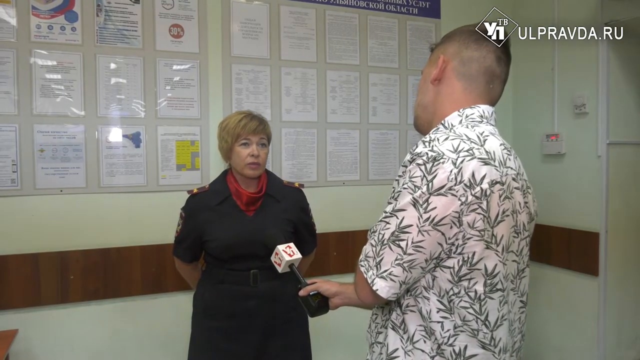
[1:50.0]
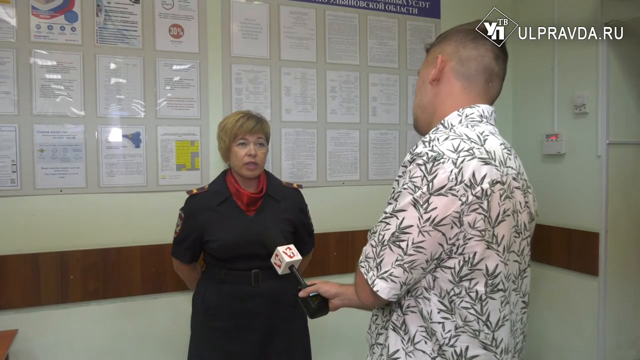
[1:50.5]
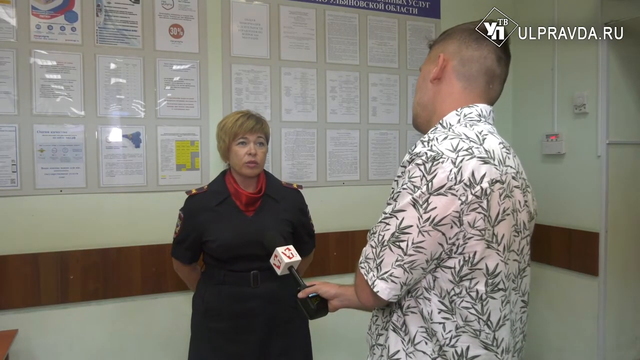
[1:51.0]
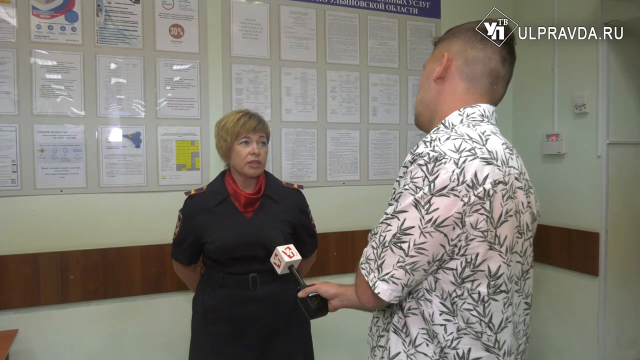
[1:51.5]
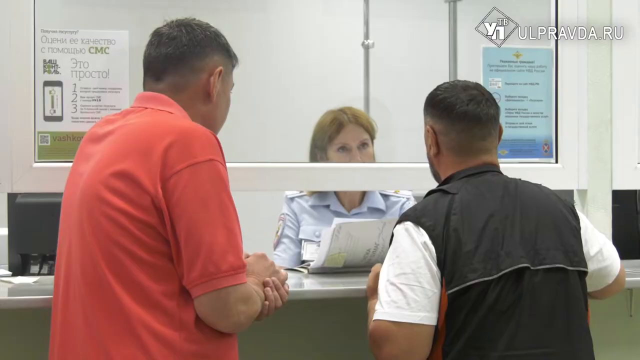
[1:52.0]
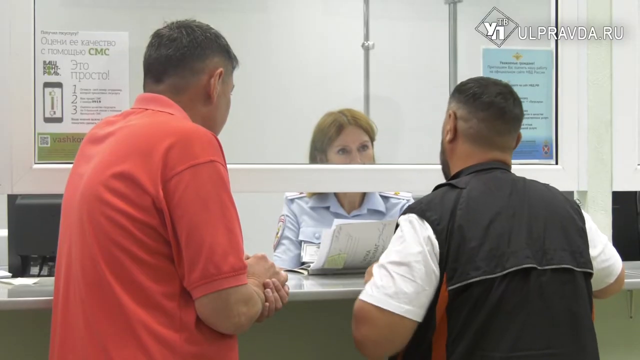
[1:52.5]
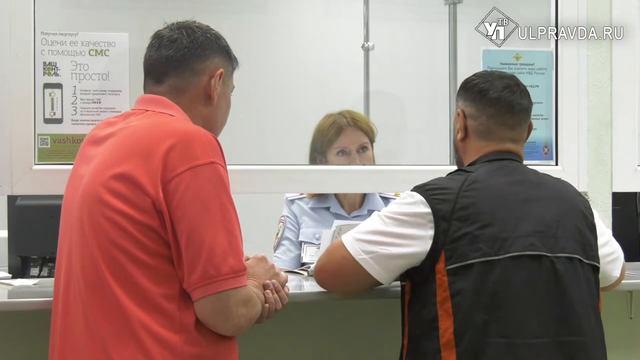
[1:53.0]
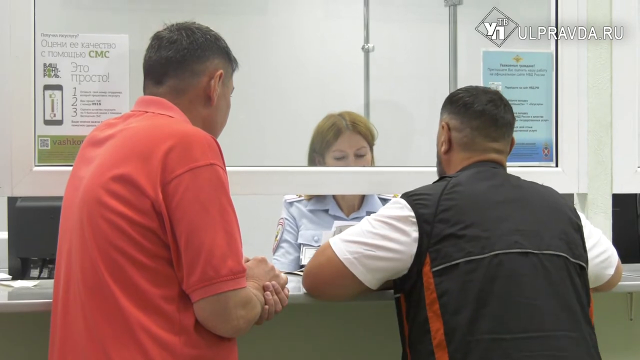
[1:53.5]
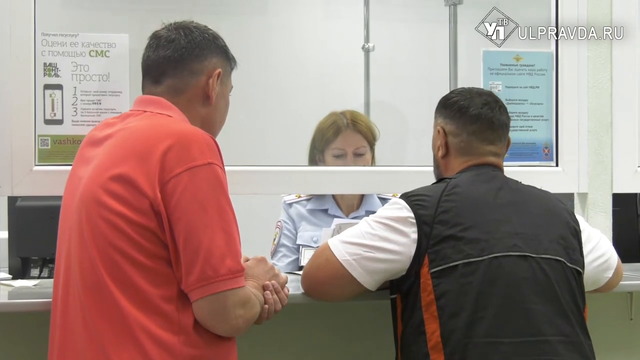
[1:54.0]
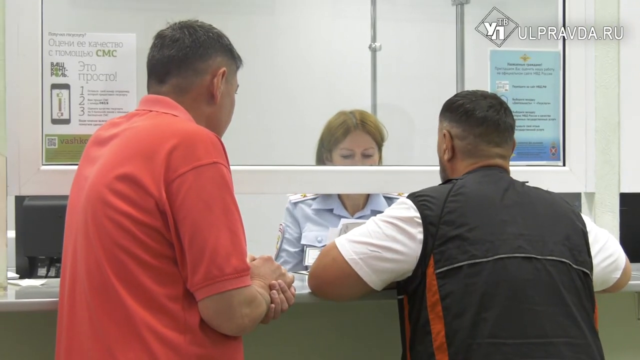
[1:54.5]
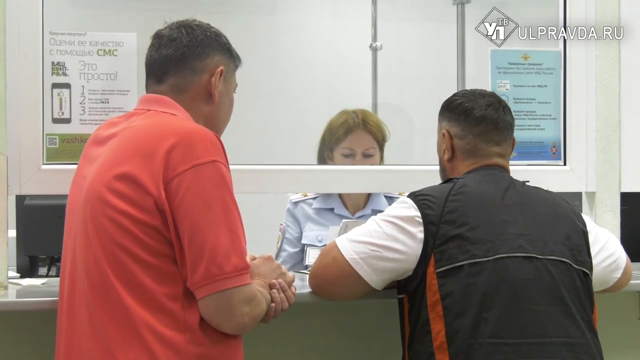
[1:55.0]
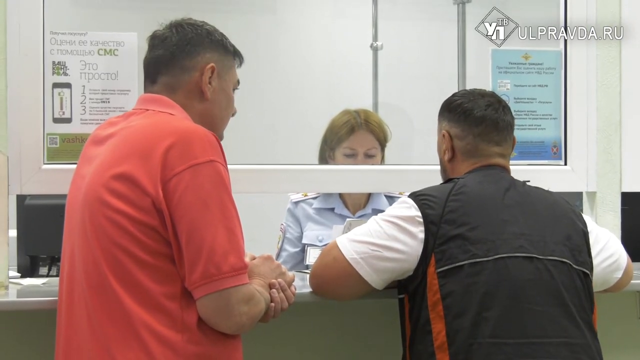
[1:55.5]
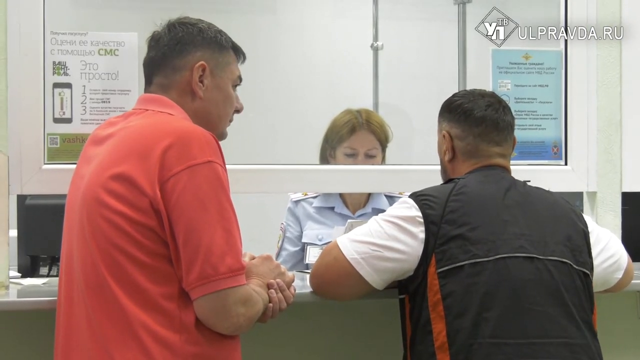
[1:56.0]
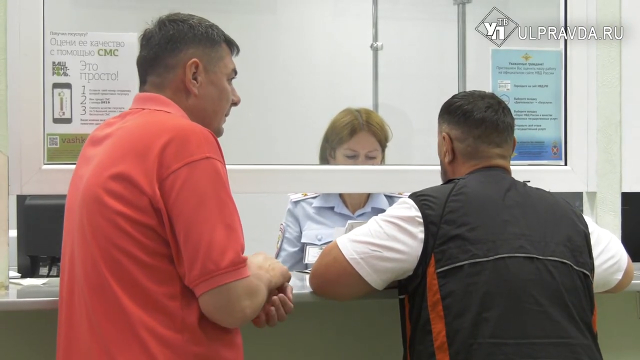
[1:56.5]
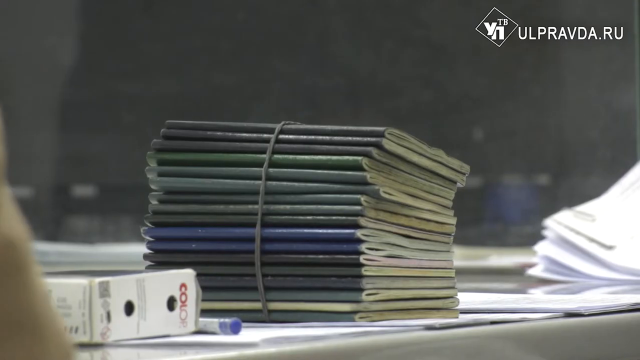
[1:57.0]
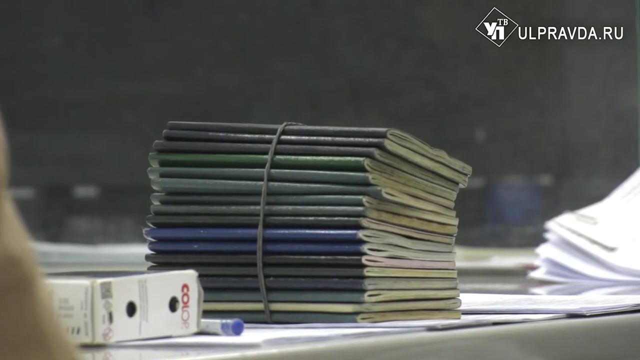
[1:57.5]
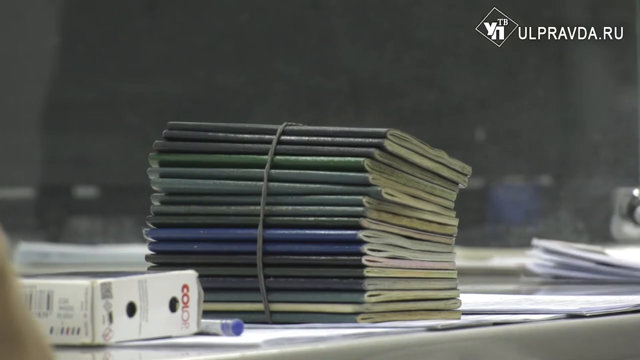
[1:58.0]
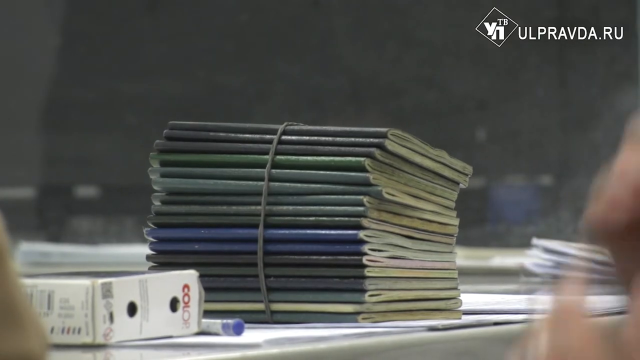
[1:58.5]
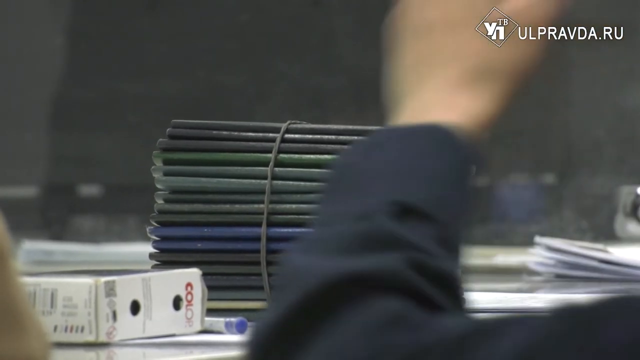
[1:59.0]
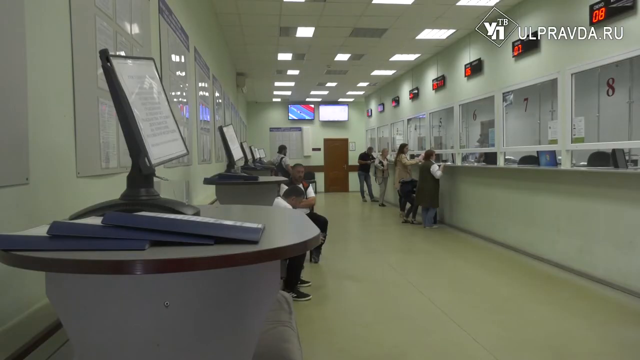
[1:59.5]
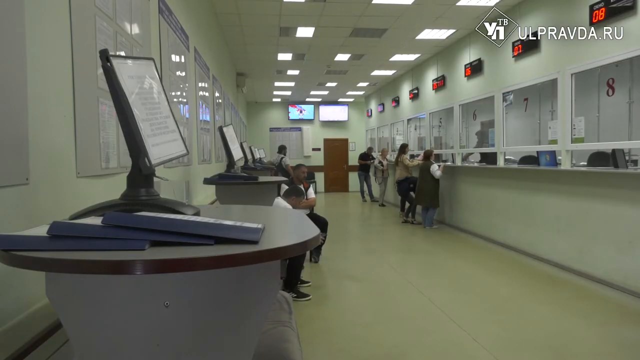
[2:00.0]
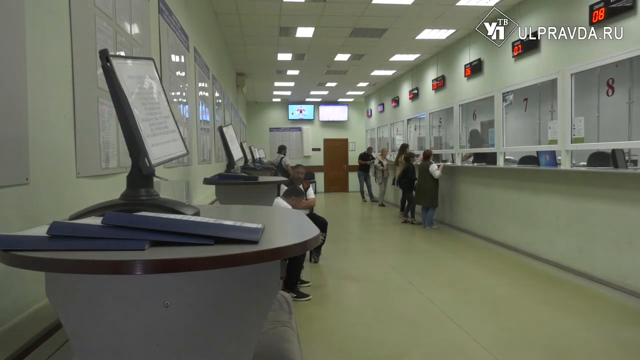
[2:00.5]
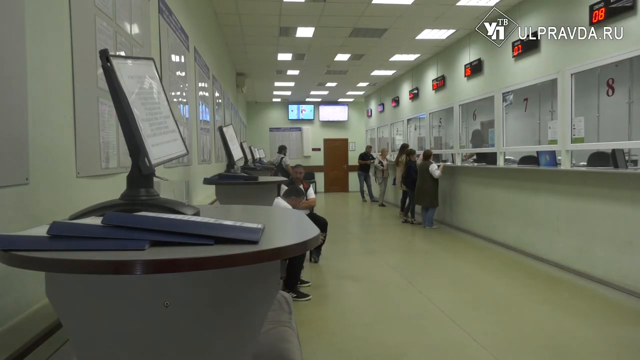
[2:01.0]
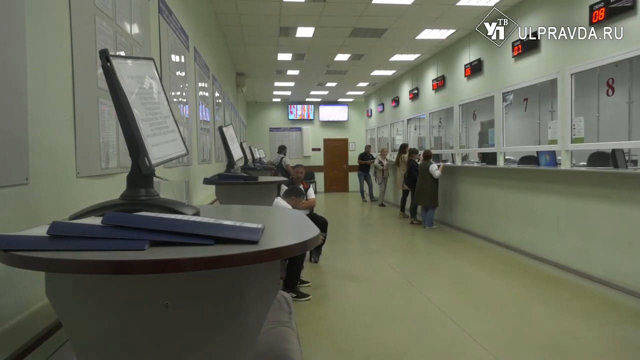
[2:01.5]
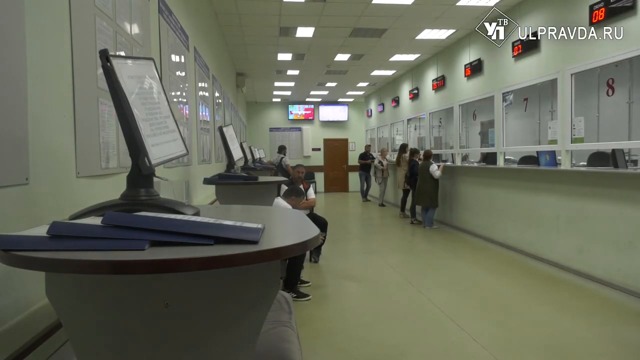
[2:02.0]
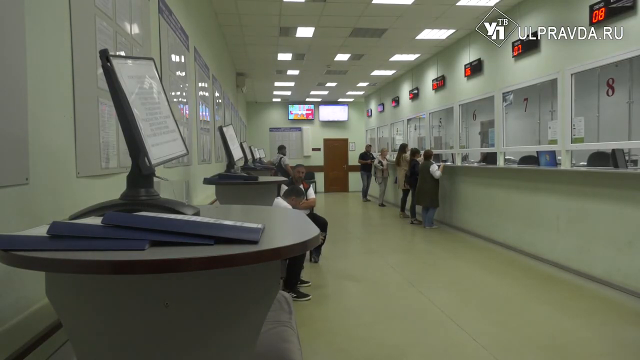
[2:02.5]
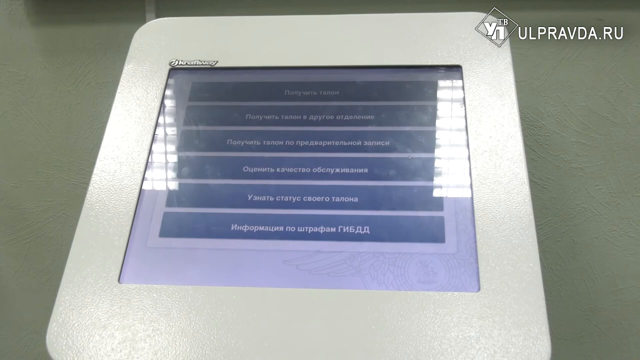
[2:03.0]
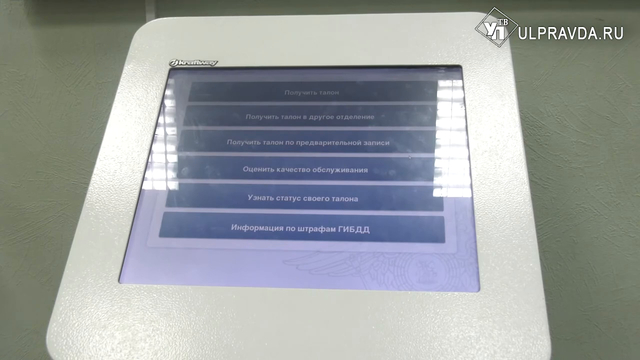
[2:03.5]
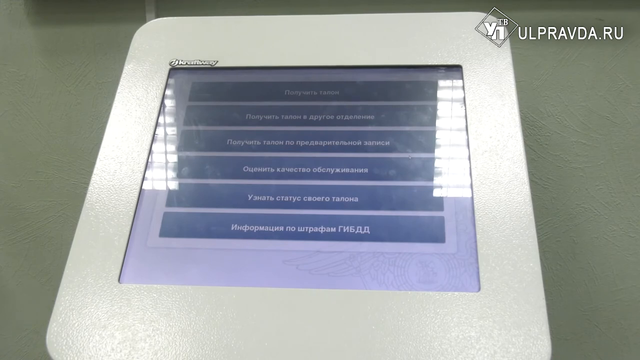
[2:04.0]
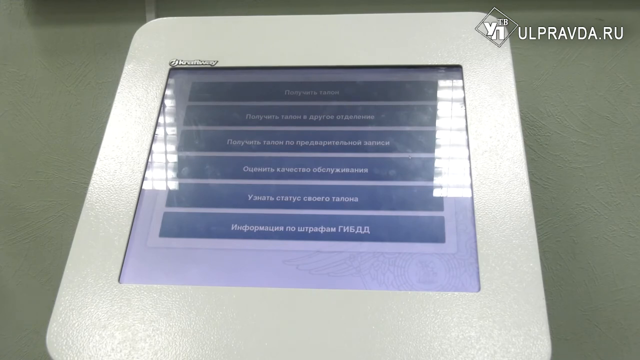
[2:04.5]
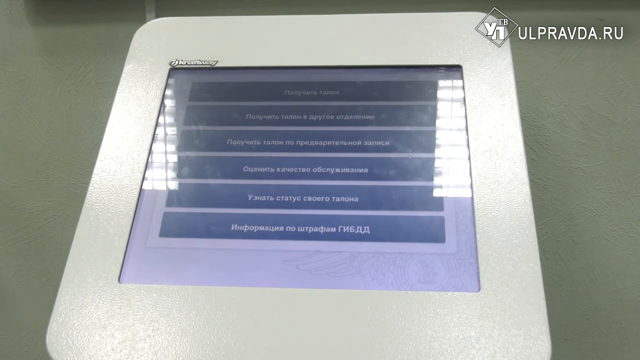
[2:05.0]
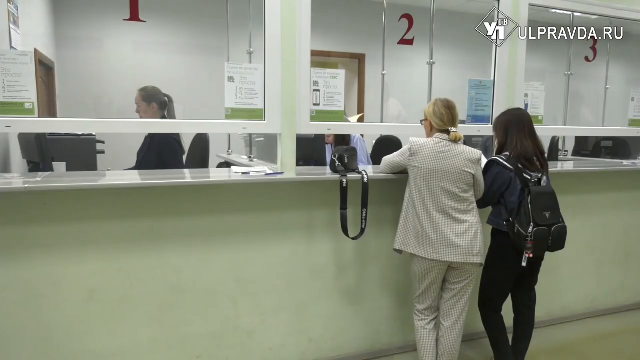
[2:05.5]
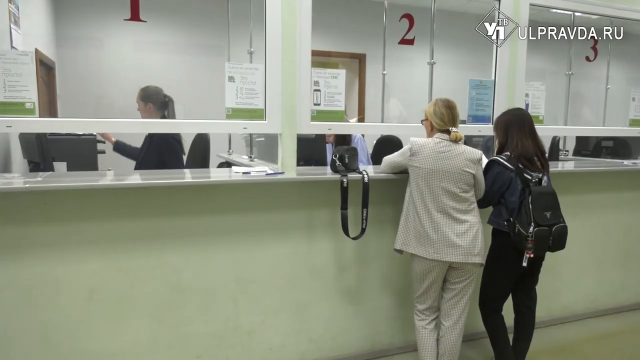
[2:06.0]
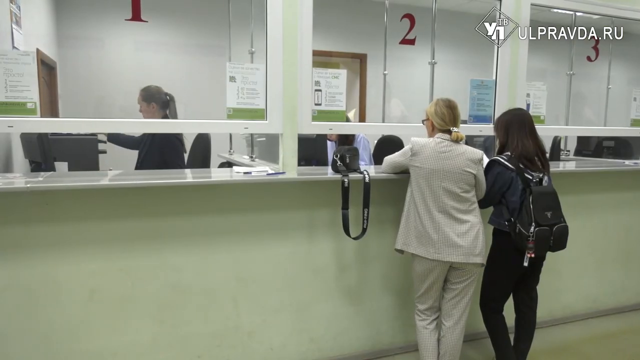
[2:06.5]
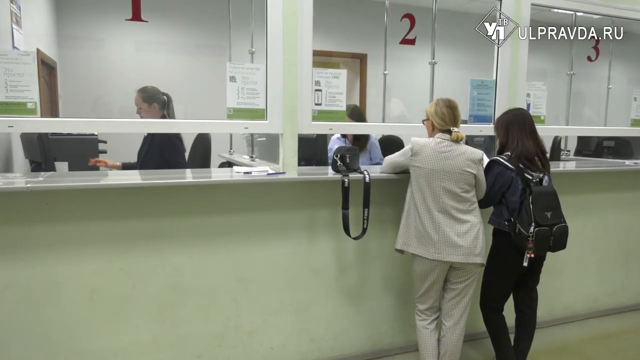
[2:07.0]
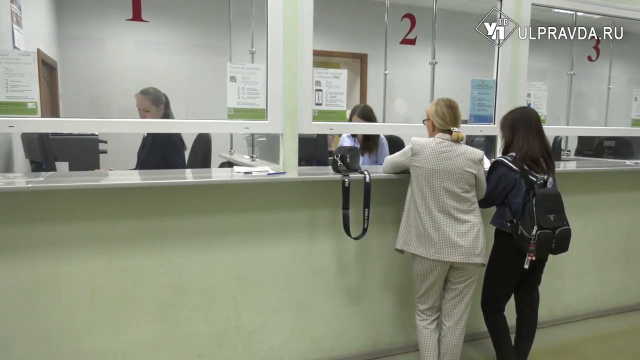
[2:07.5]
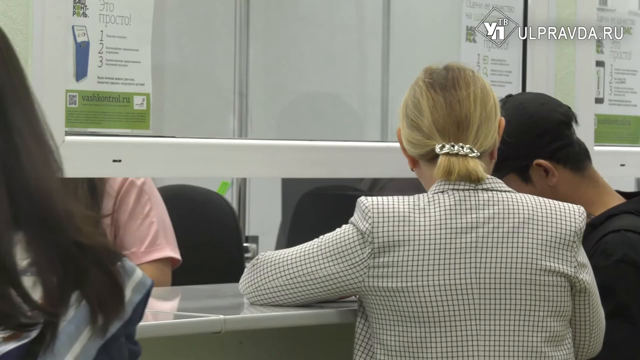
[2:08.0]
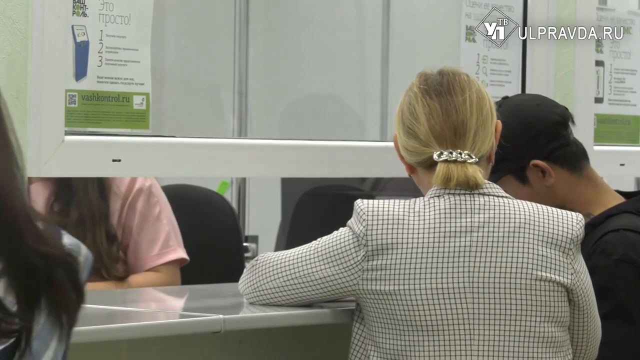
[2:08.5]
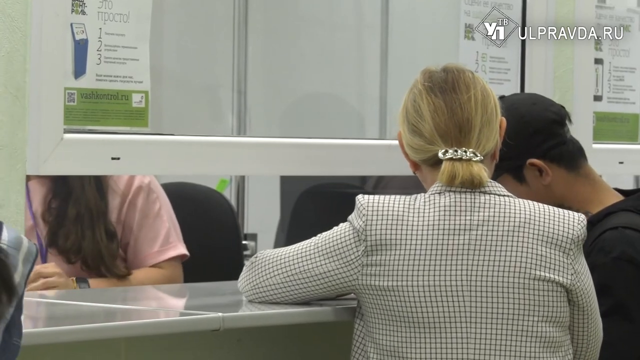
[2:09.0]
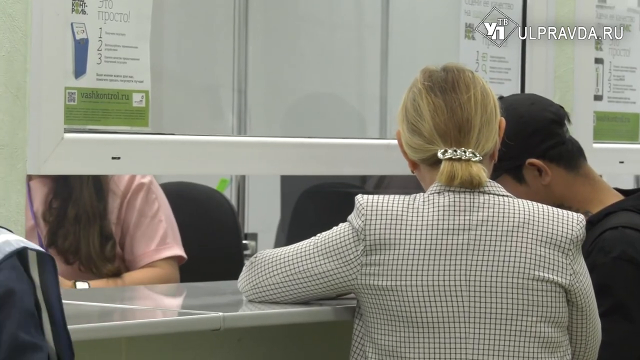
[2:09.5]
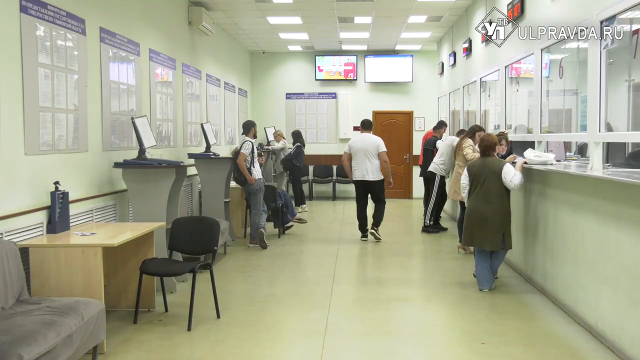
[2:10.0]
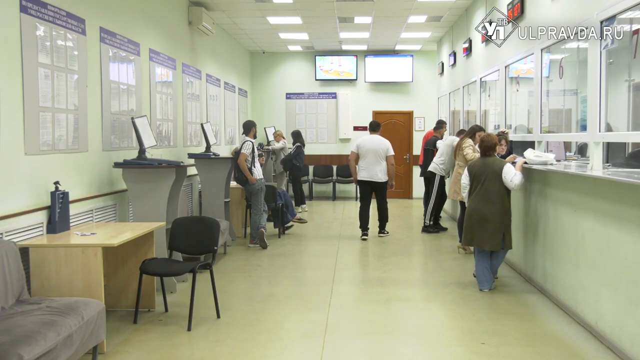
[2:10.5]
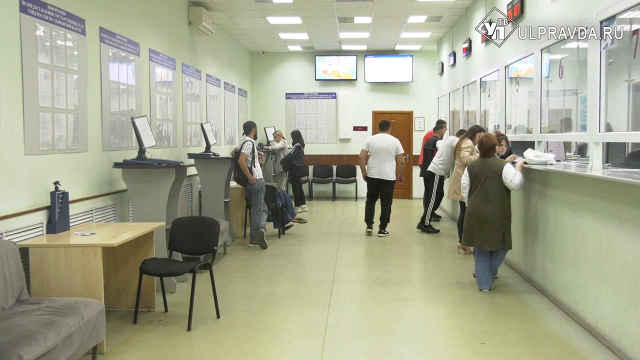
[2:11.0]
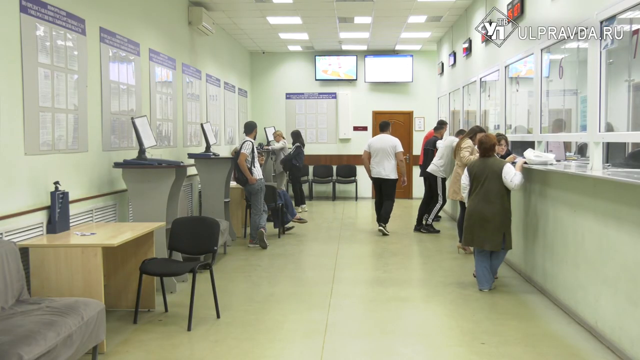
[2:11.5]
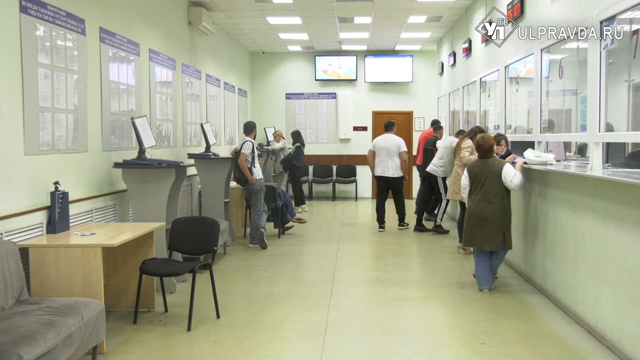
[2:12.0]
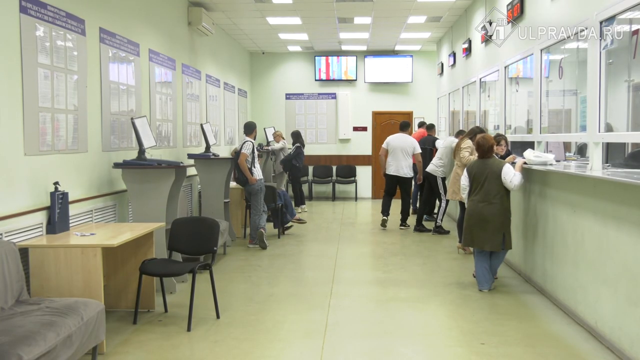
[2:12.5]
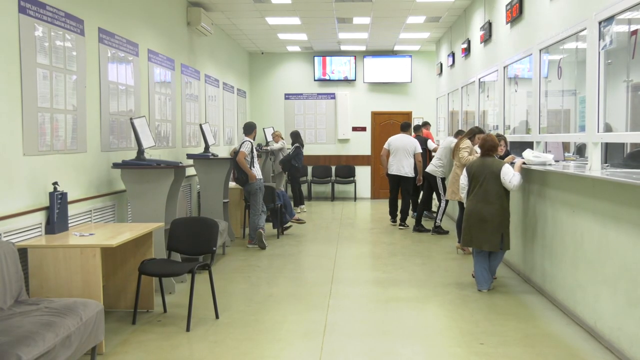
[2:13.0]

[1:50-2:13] People stand in front of a screen, and behind it are women, apparently working for the Russian government, processing what appear to be the passports of the people waiting patiently. Various electronic devices are being used as part of the process. It could be an immigration site or another place where information is processed. Everyone appears to be Caucasian and very likely Russian, given the ".ru" in the top right-hand corner.